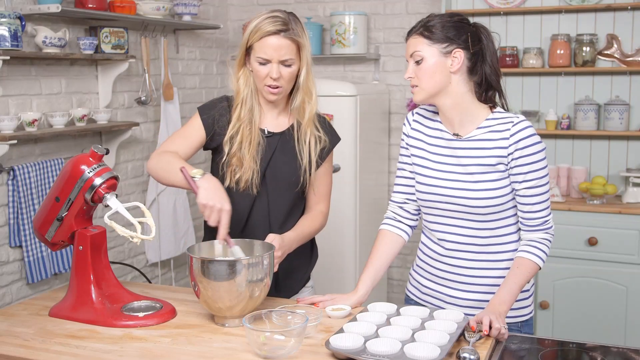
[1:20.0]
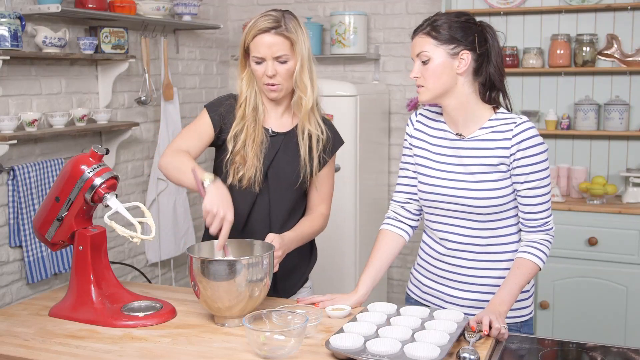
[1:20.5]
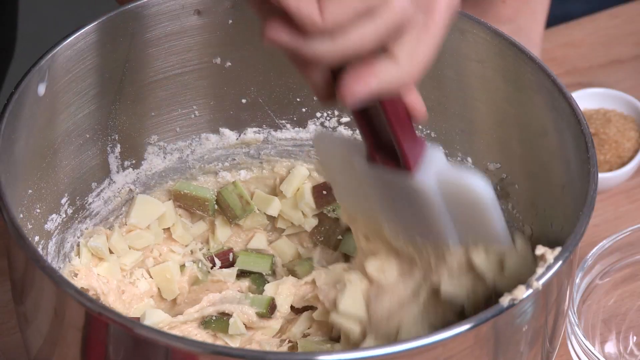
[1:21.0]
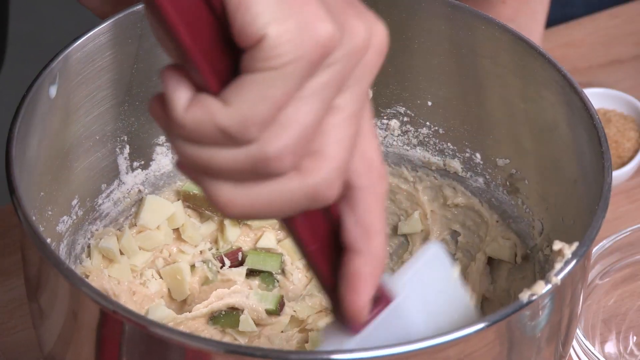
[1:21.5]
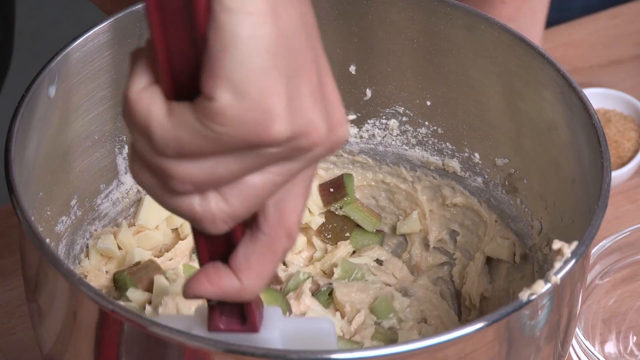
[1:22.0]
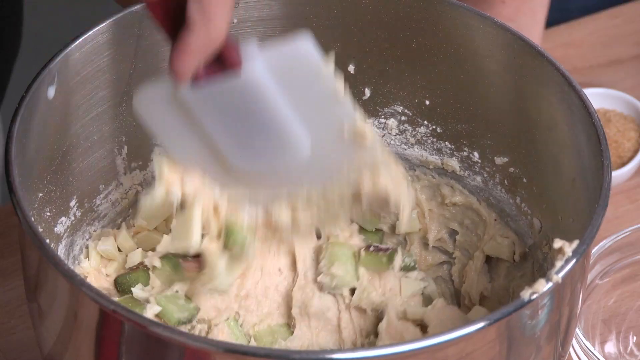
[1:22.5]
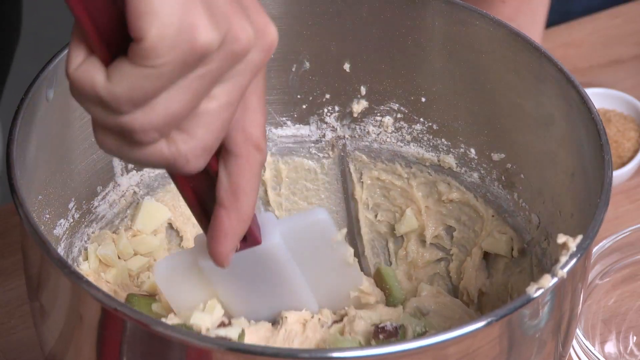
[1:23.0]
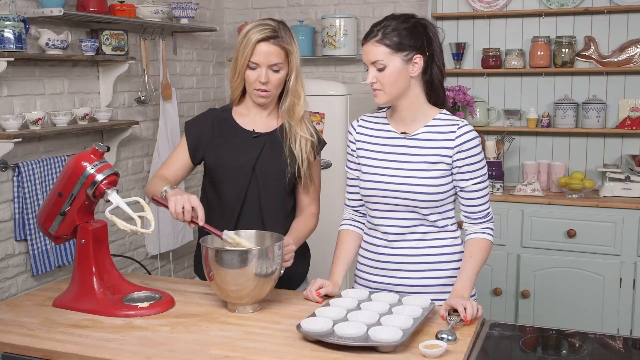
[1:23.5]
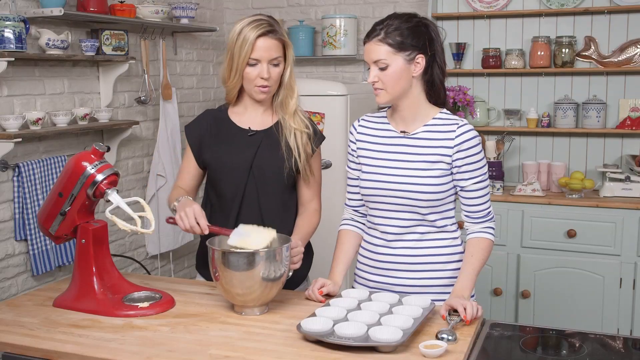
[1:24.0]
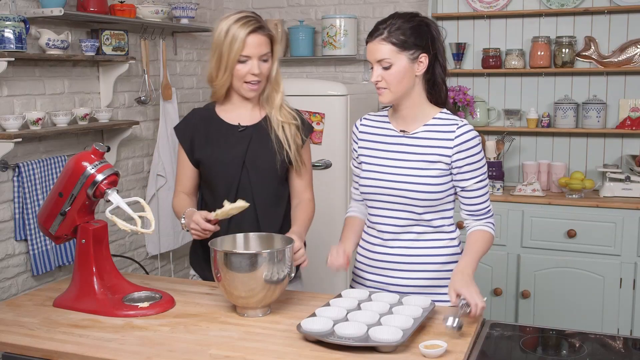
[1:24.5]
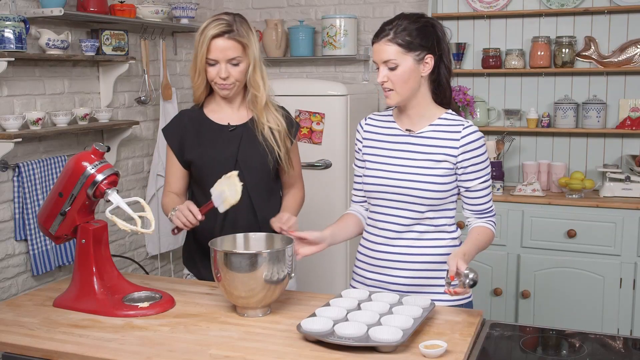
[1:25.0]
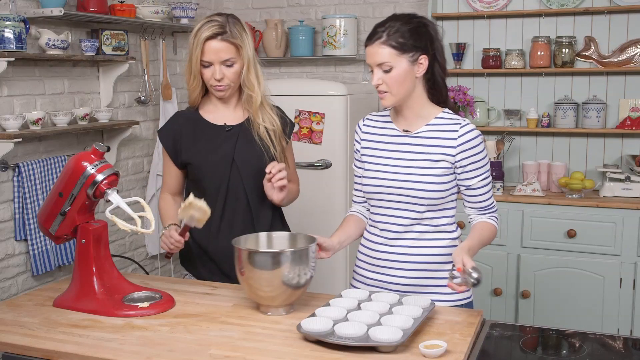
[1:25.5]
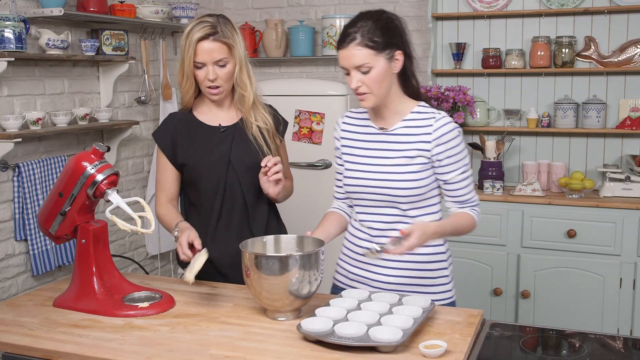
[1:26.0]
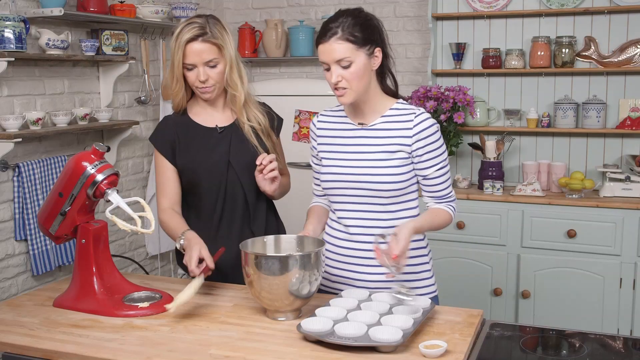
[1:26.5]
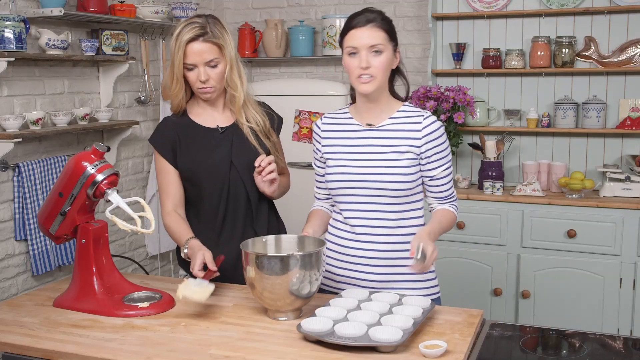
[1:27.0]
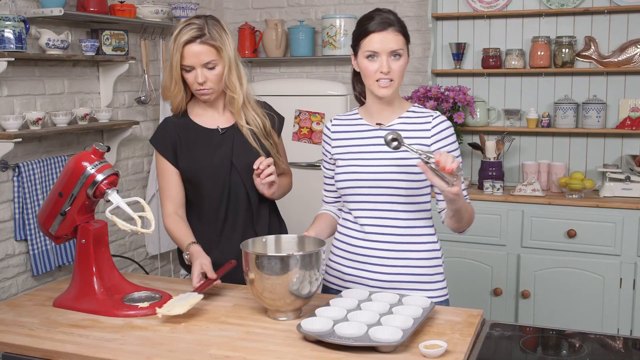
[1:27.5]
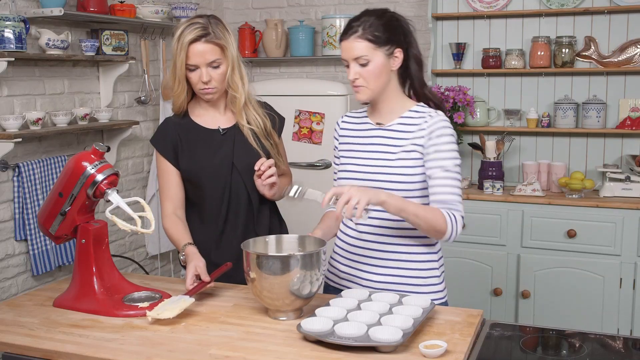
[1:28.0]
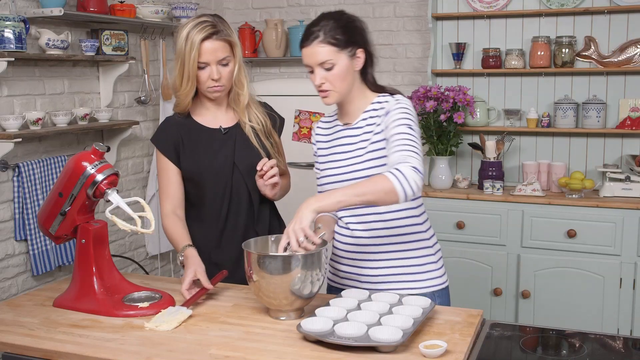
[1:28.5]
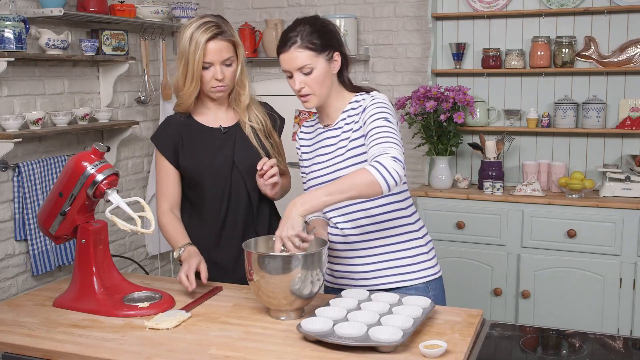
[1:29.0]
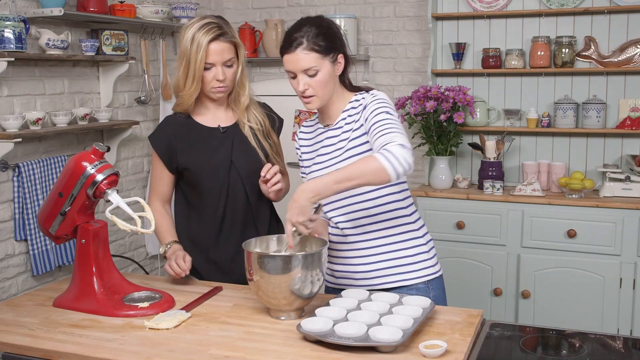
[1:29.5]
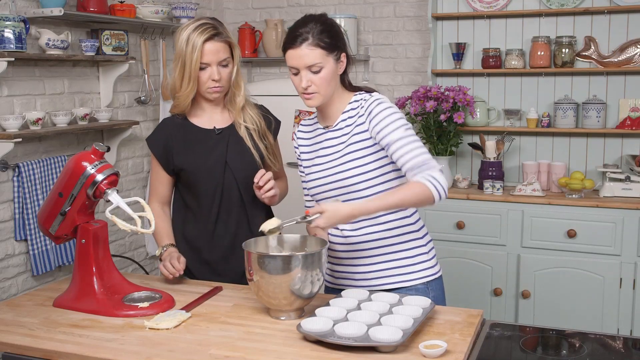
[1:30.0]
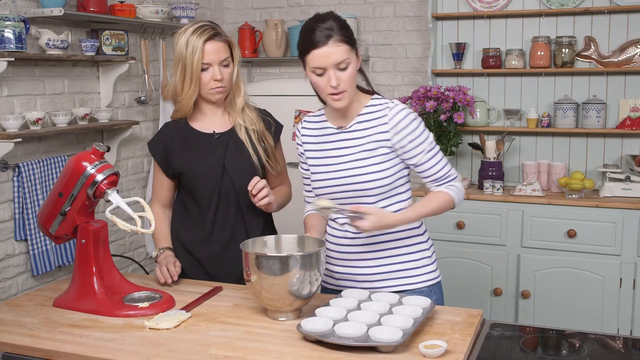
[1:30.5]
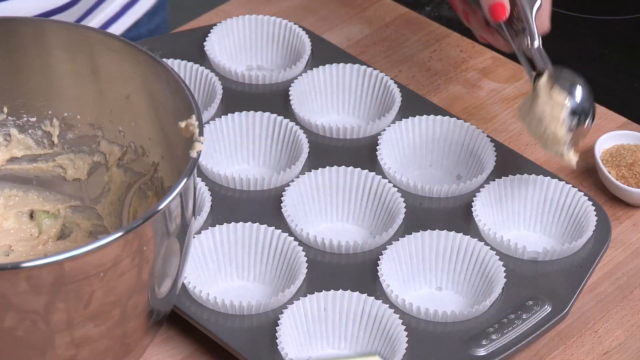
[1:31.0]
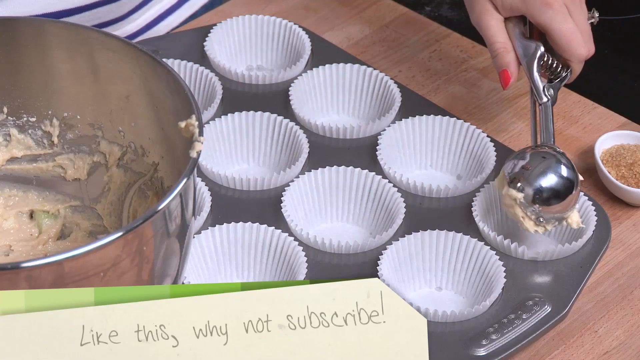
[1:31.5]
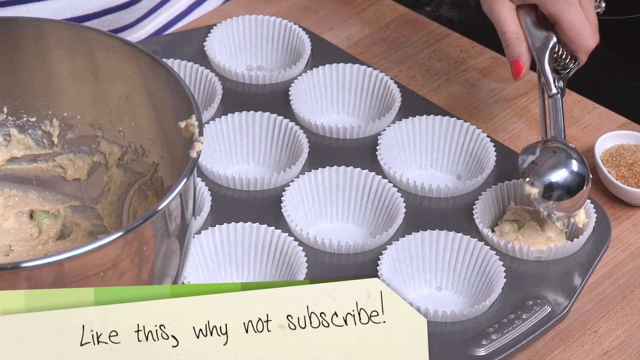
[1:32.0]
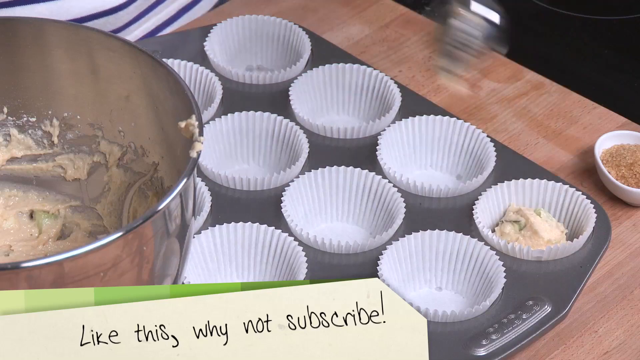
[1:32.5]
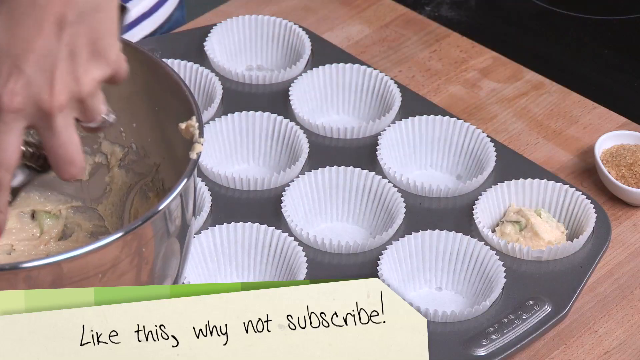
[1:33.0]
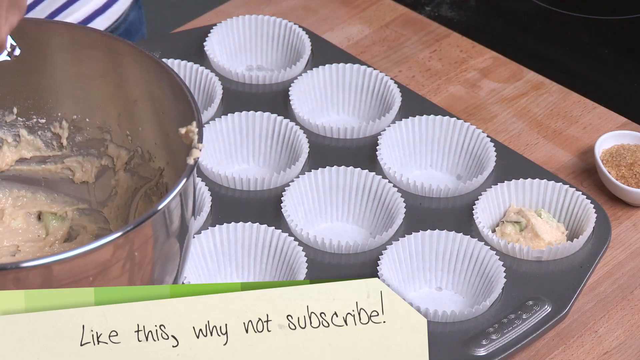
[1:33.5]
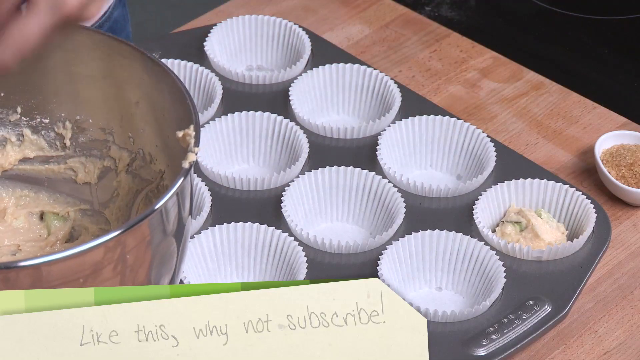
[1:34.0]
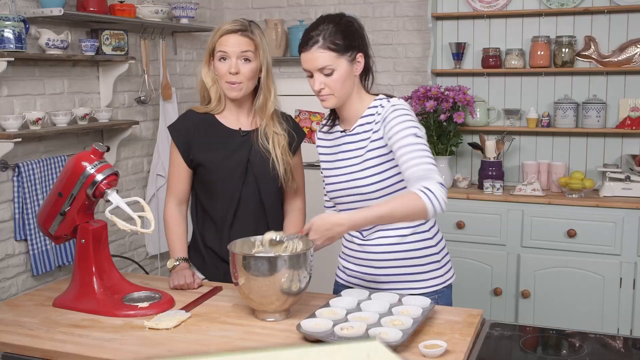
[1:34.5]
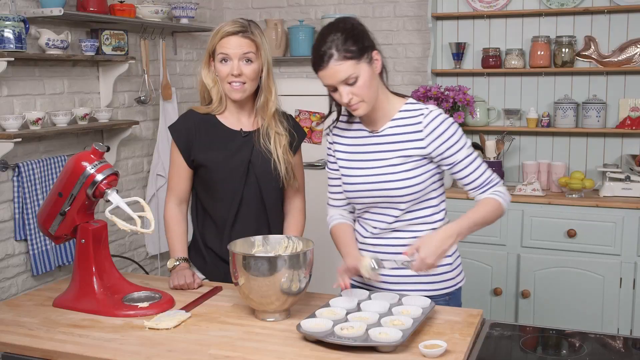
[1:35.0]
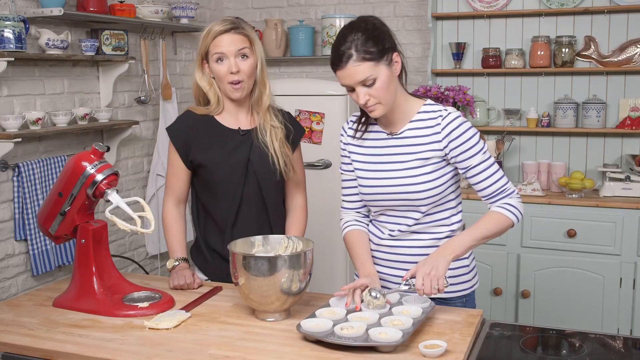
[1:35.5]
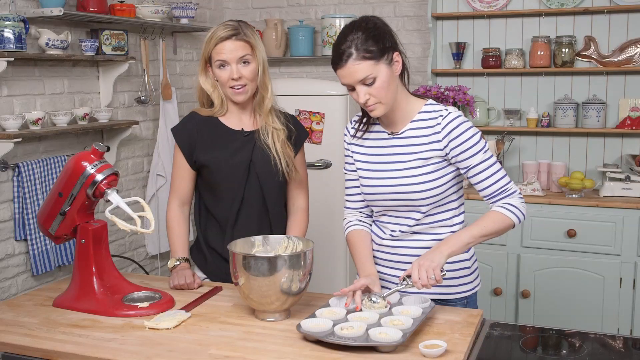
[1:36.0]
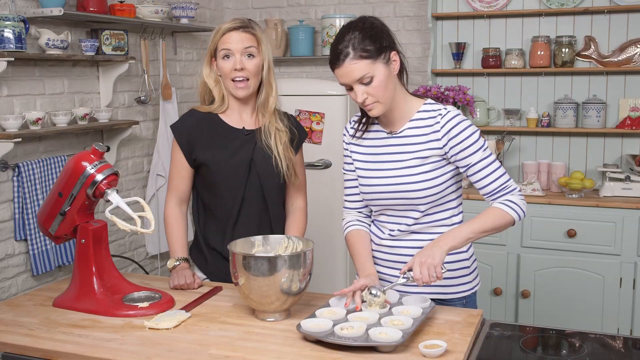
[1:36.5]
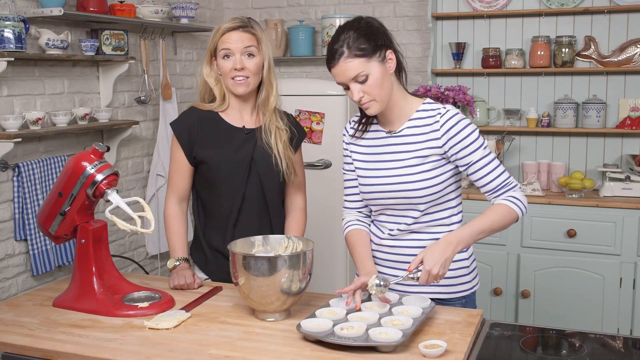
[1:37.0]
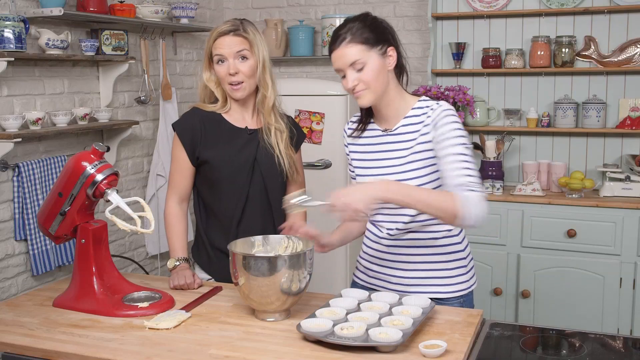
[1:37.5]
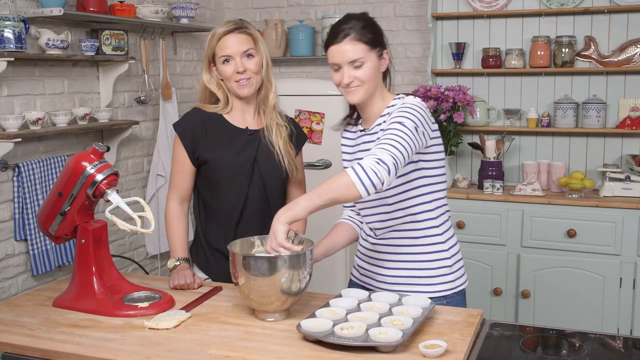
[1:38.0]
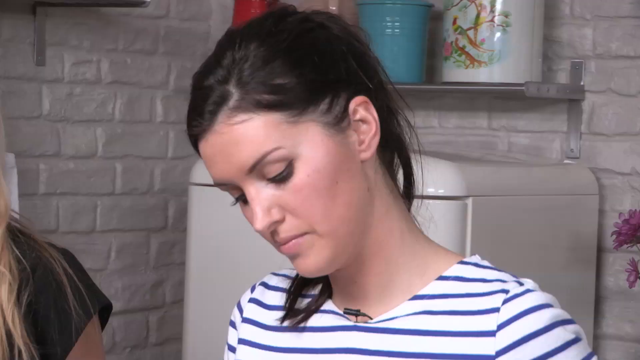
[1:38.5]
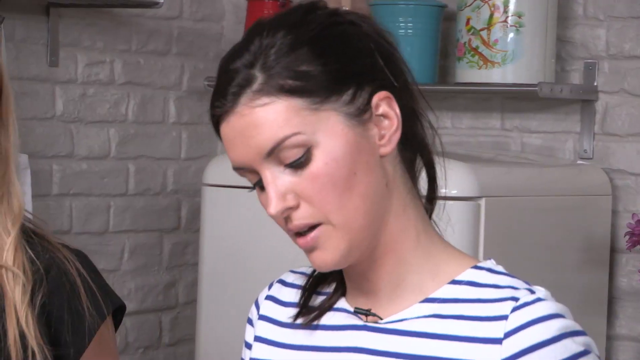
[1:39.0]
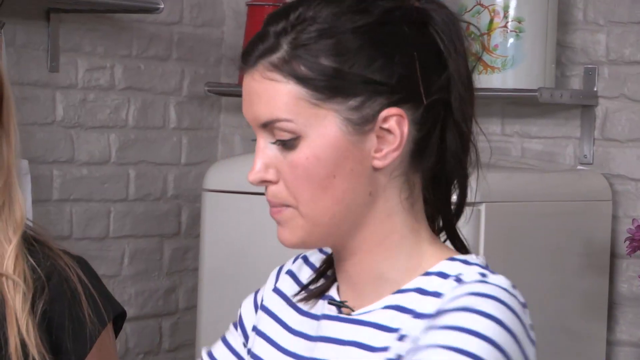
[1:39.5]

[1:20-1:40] They seem to be mixing the ingredients together. She seems to have added some sort of white chocolate, and there is an unidentified green ingredient that seems to be some sort of fruit or nut. The lady on the left seems to be grabbing scoops of the cupcake batter and placing them in the cupcake pan, getting ready for baking. Text at the bottom of the screen reads "like this, why not subscribe."